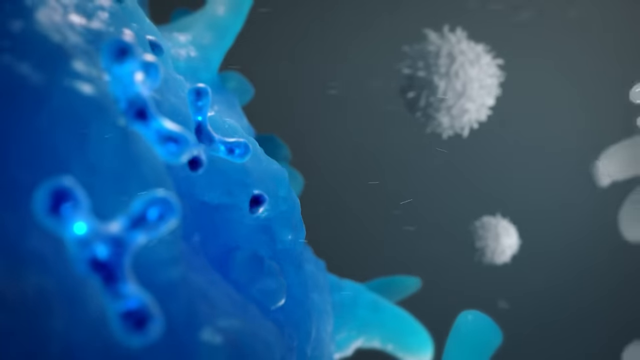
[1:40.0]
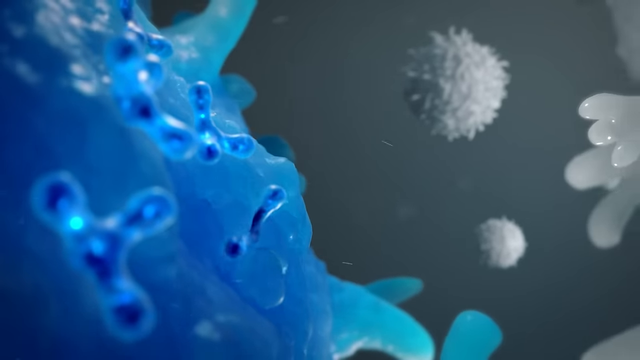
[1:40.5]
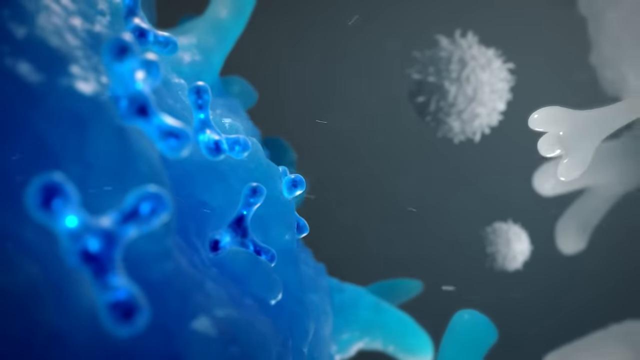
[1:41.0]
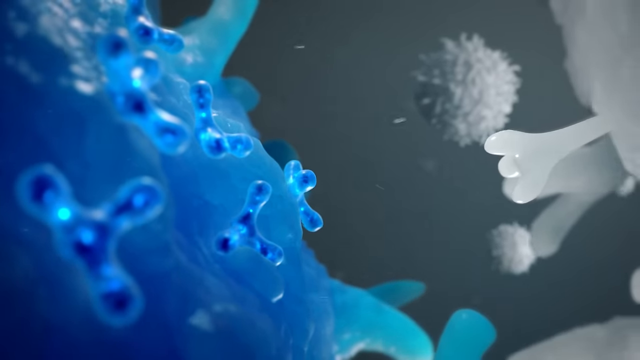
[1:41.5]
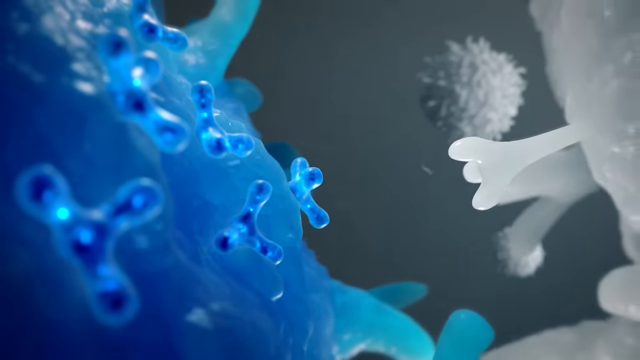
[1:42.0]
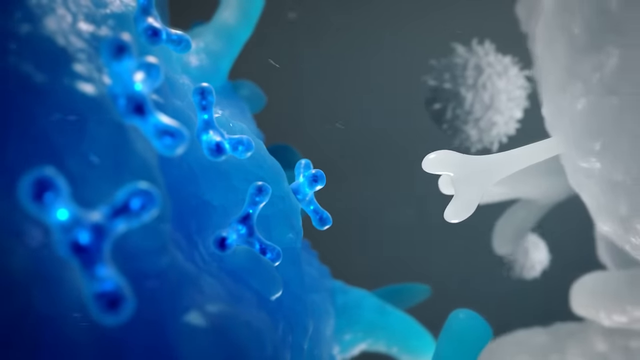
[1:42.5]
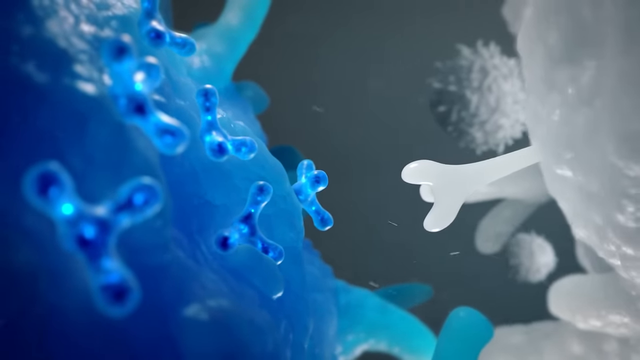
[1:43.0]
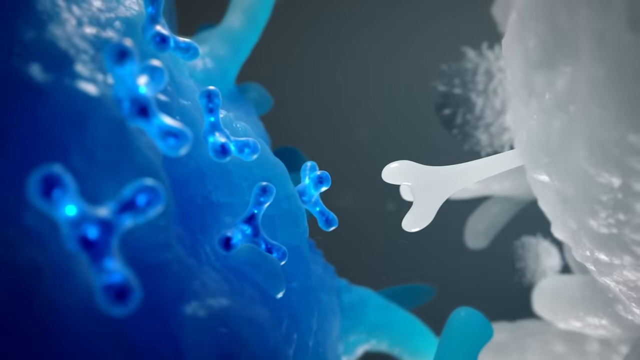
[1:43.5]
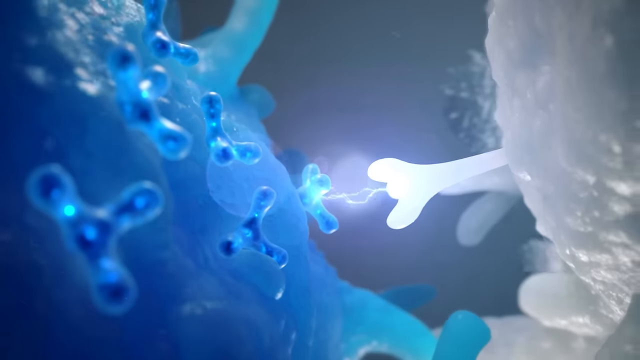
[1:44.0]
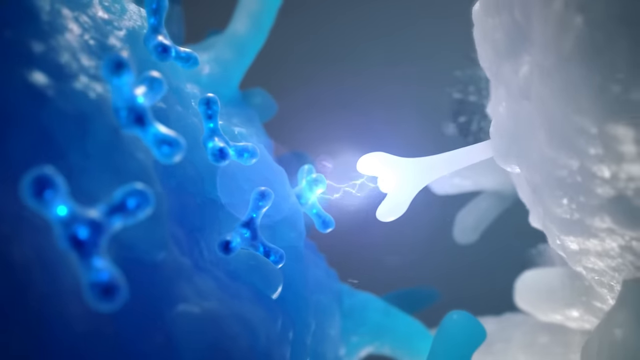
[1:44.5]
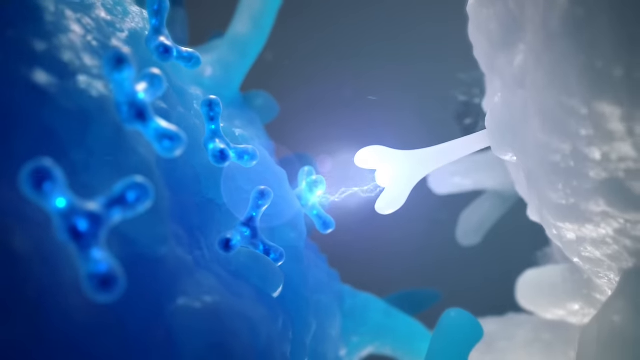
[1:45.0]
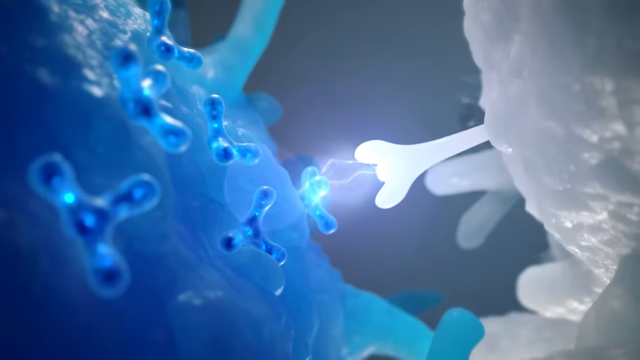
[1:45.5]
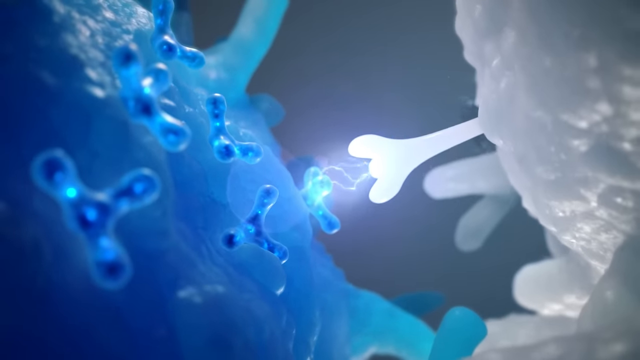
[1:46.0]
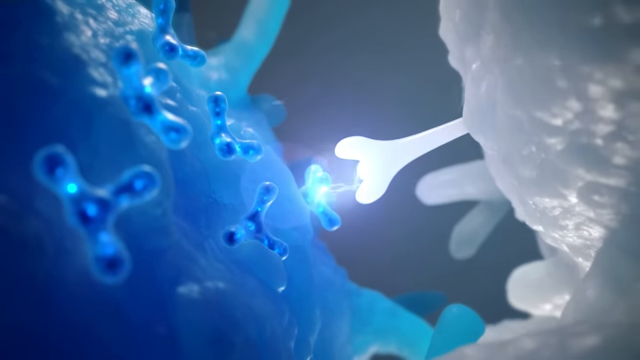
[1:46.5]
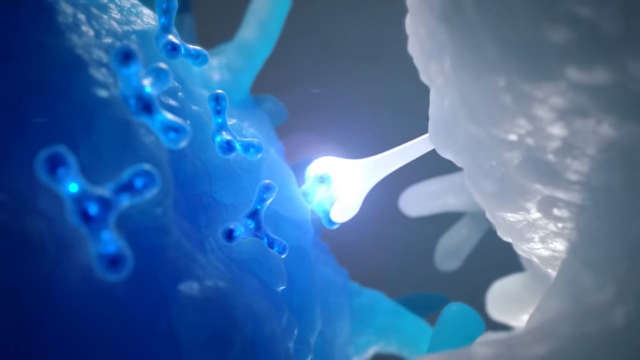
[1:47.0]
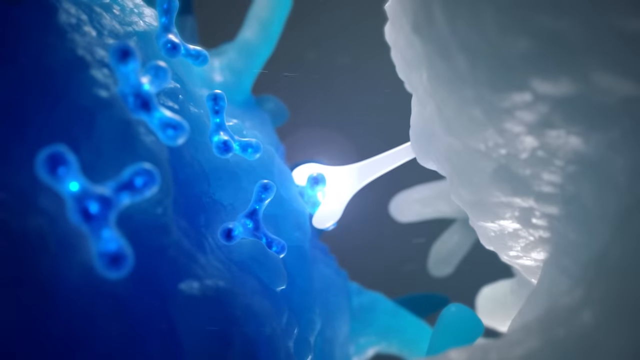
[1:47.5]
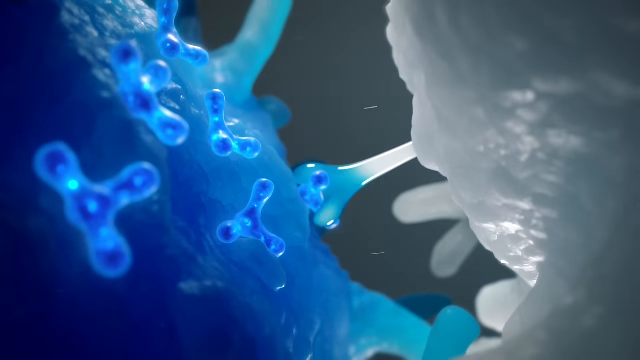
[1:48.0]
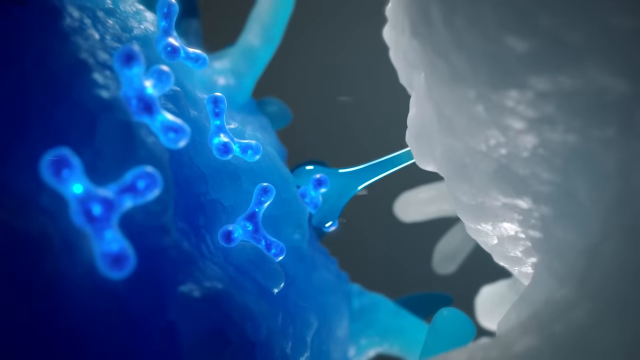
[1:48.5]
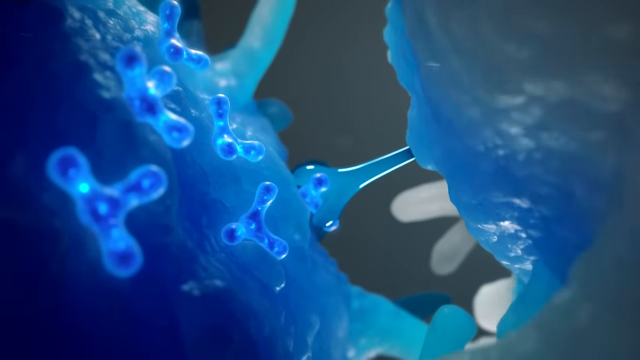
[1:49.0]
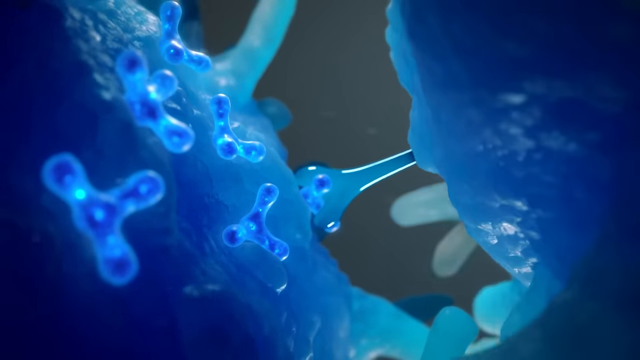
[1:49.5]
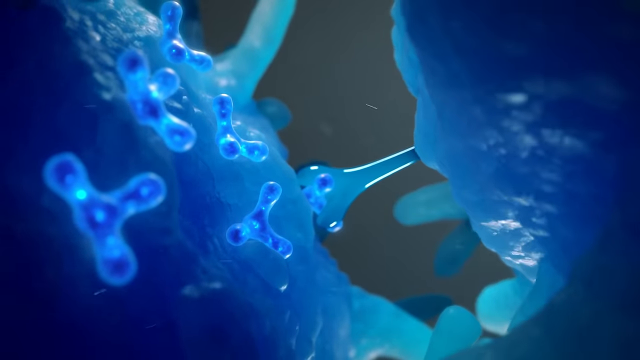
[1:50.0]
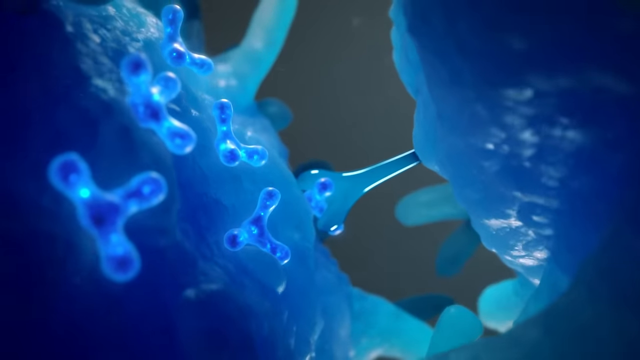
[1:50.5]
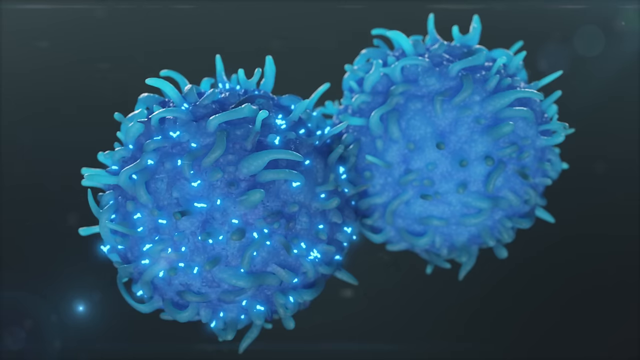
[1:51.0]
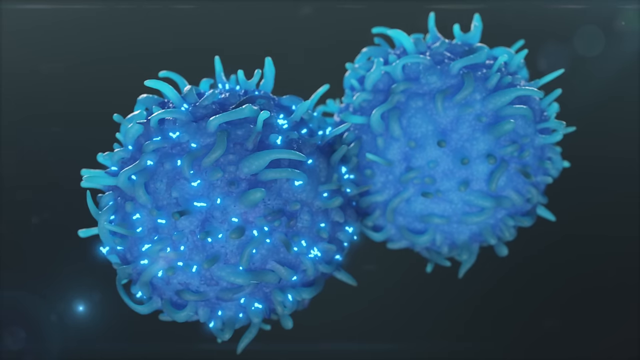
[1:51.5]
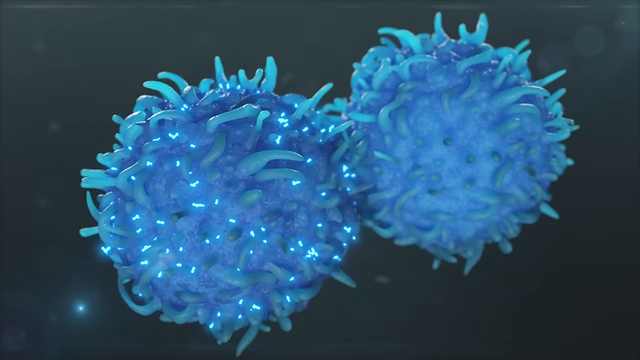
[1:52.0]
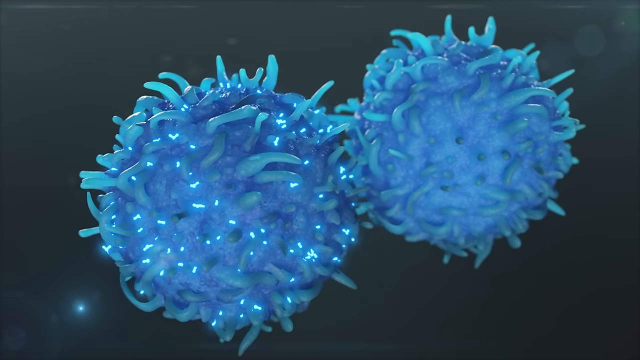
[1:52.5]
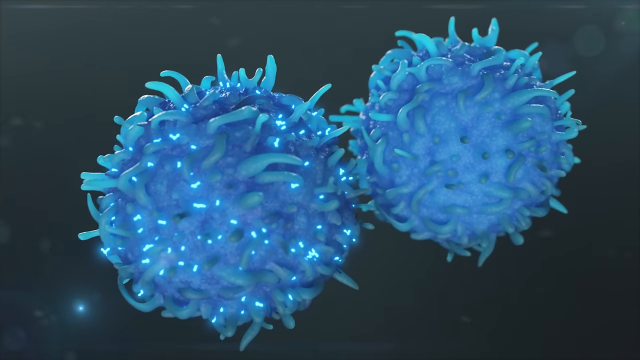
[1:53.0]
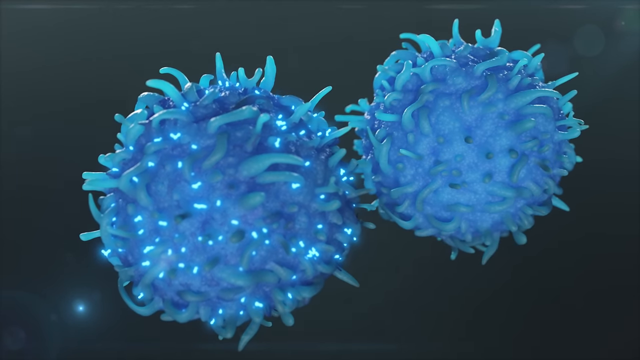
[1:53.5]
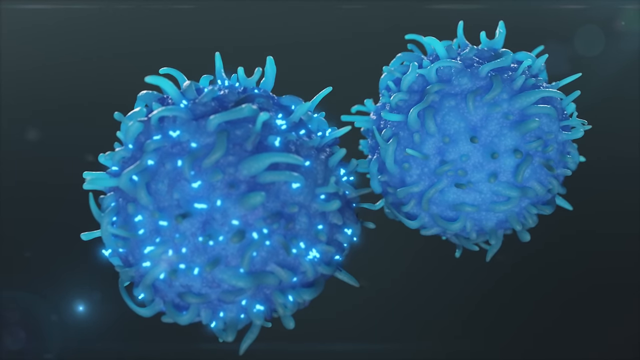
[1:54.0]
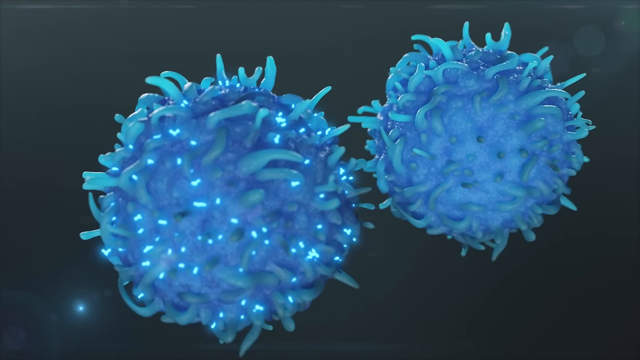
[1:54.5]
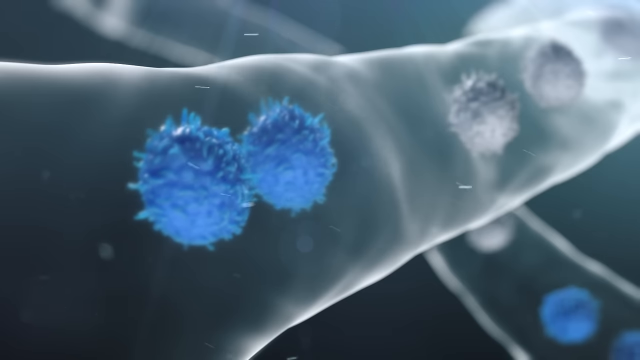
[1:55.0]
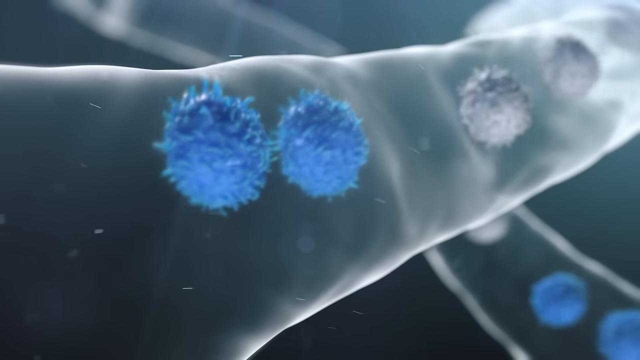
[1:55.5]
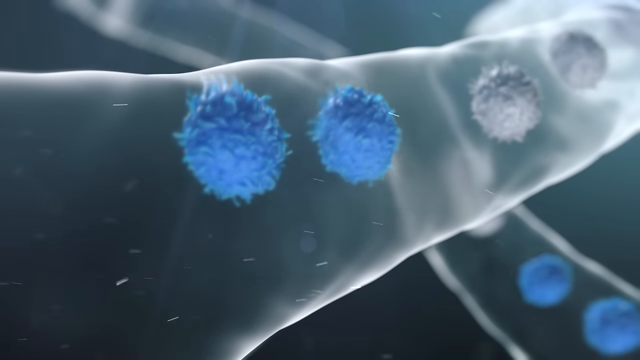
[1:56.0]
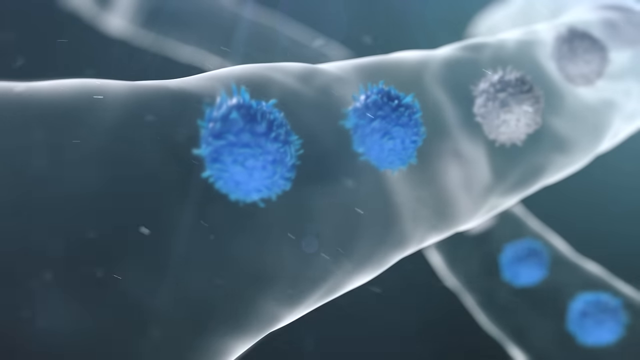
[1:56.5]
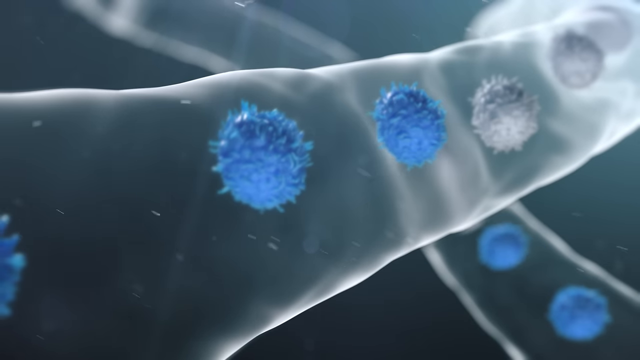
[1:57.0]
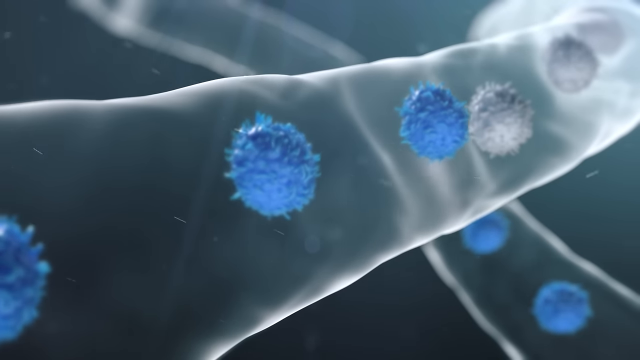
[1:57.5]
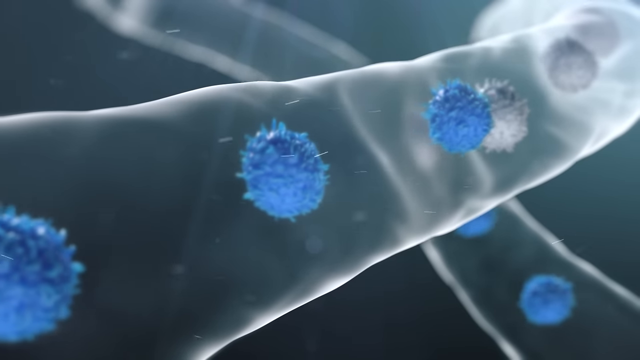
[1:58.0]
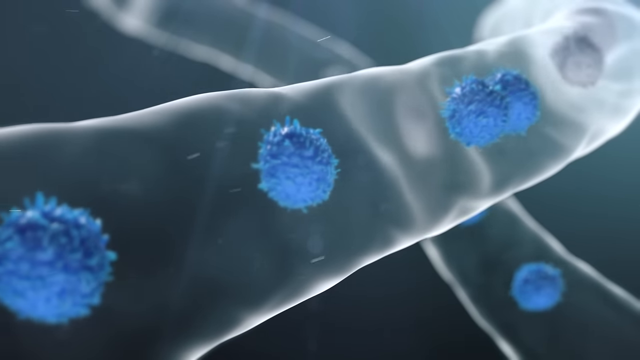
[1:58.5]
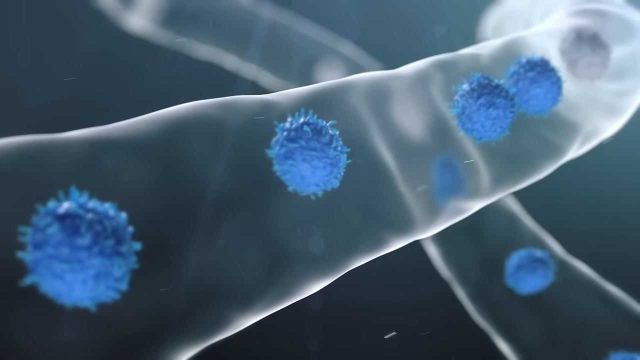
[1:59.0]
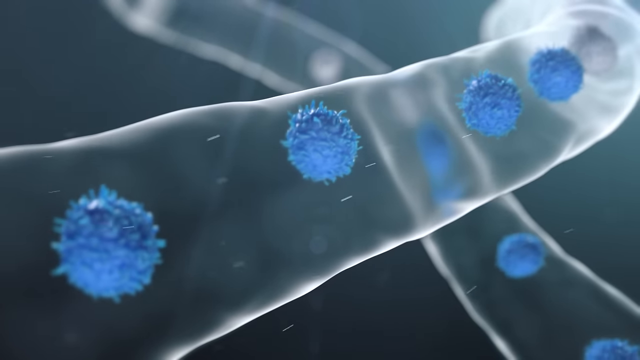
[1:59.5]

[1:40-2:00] The video seems to depict a scientific concept. A blue jelly-type substance covers the left side, and a similar white substance is on the right. A small blue tendril comes out of the left side and a small white tendril out of the right side. A spark of electricity gathers between the two before they connect and interlock. The blue spongy texture on the left spreads into the white texture, turning it blue. As the camera pans away, two balls with tendrils coming off them are visible, looking almost like squishy stress balls with little elastic strands. They separate and move along through see-through tubes. There are more white and blue ones, and as the blue ones bump into the white ones, the white ones become blue.